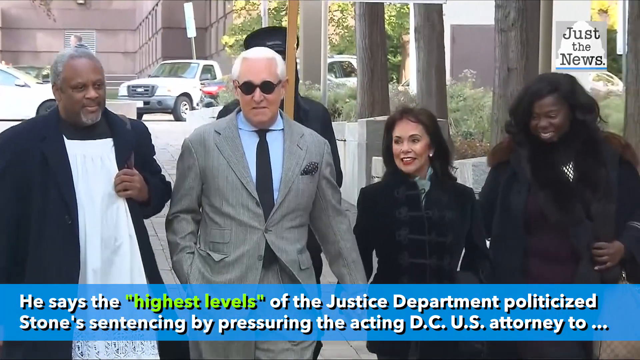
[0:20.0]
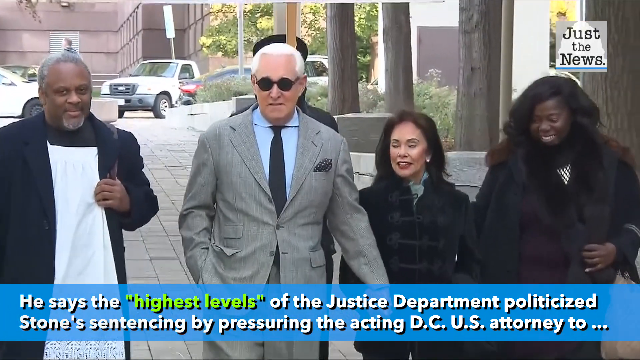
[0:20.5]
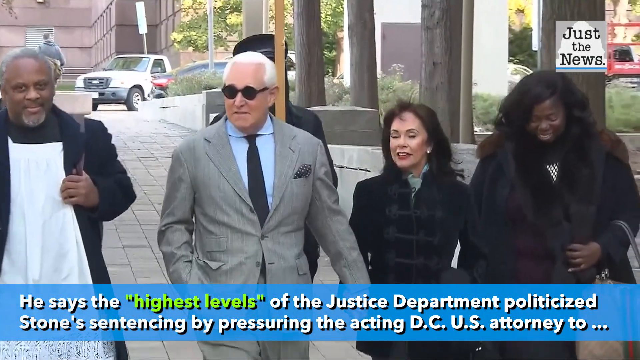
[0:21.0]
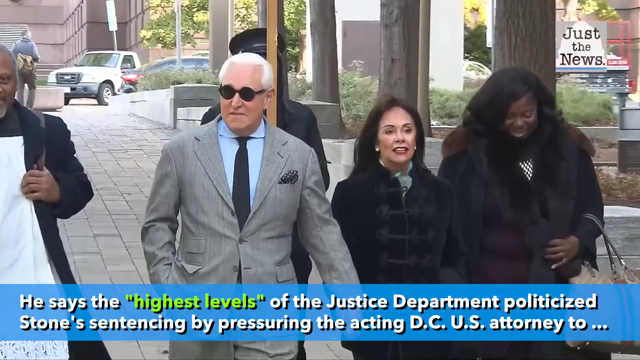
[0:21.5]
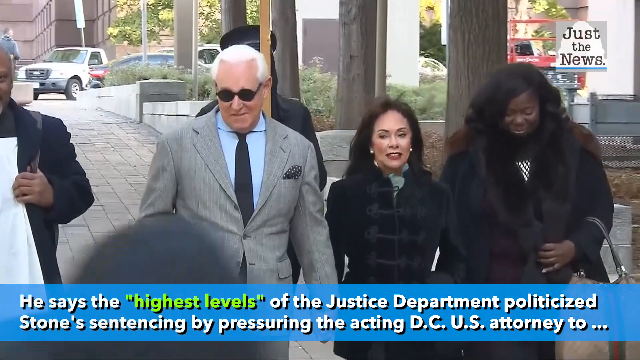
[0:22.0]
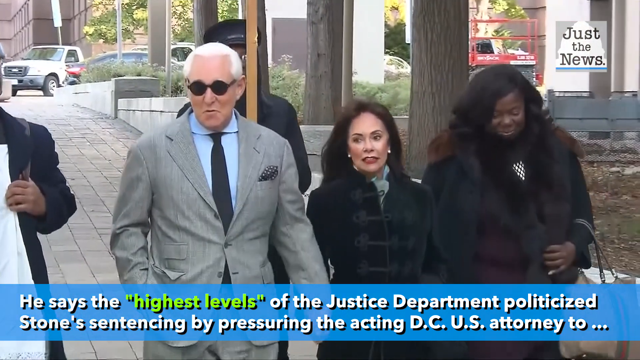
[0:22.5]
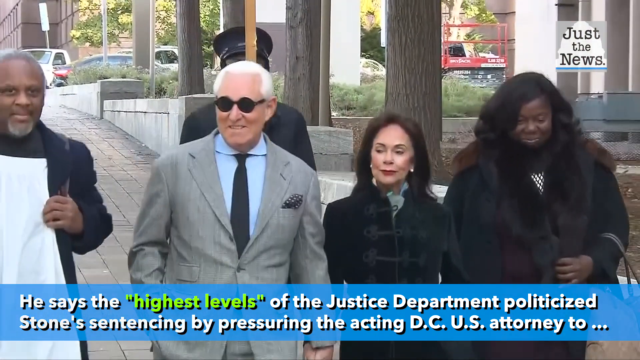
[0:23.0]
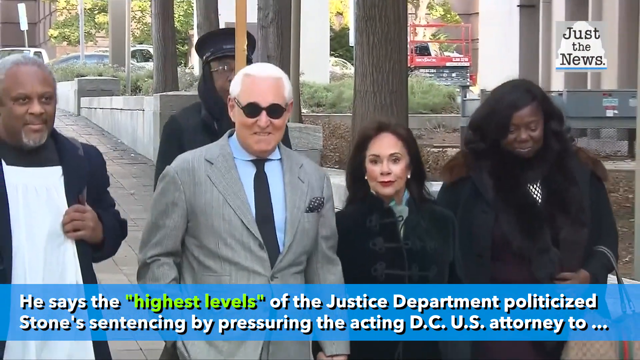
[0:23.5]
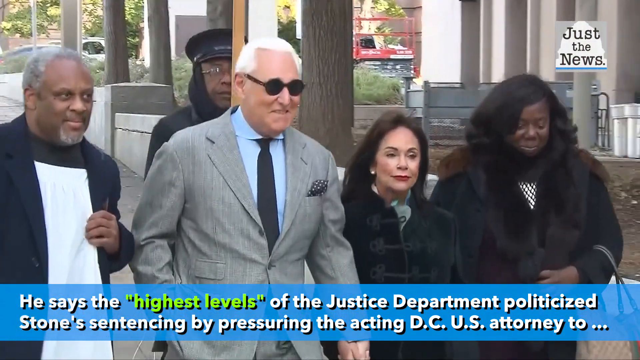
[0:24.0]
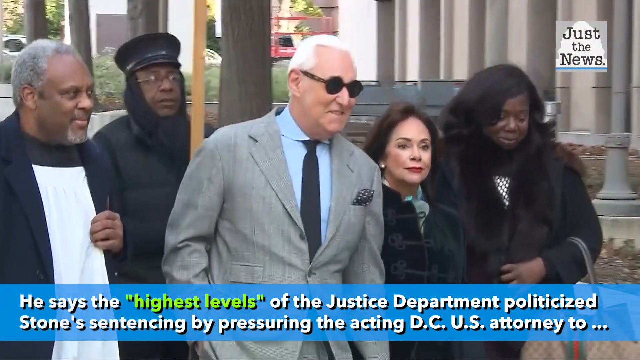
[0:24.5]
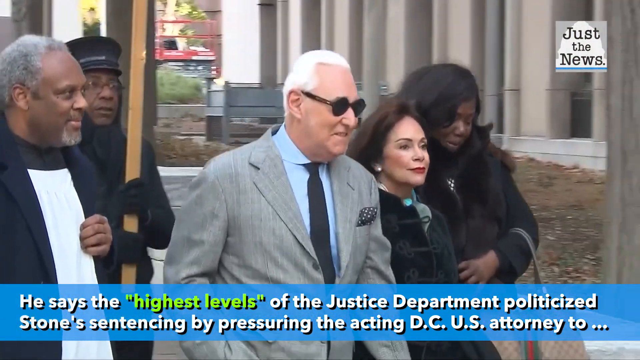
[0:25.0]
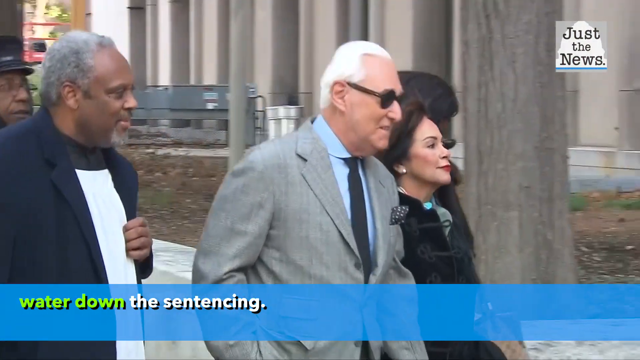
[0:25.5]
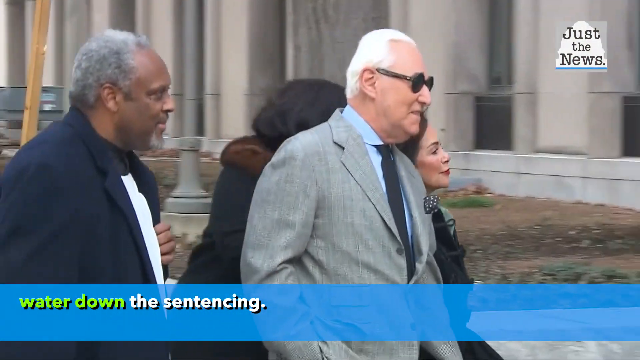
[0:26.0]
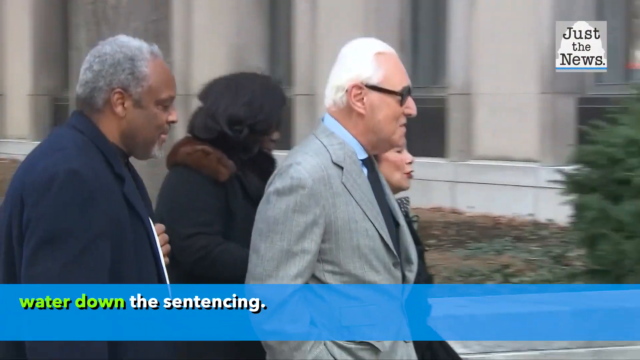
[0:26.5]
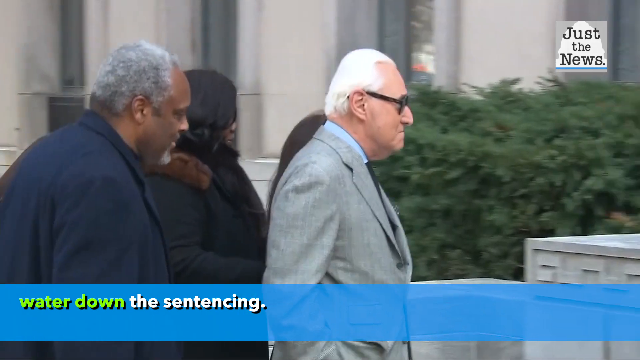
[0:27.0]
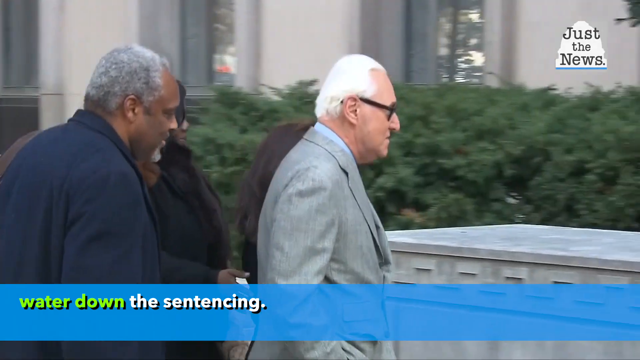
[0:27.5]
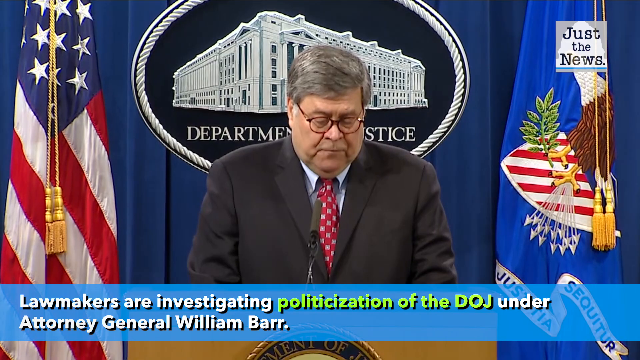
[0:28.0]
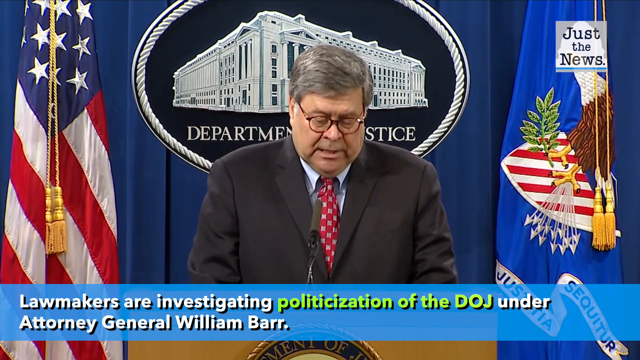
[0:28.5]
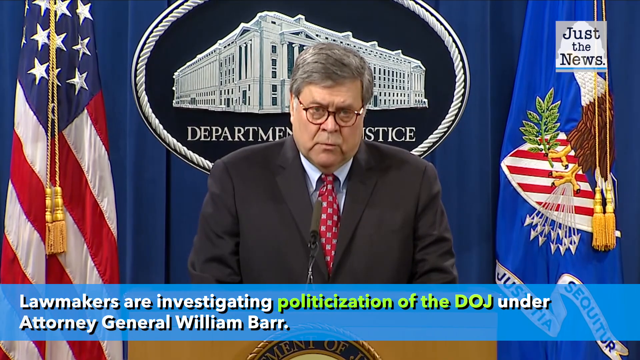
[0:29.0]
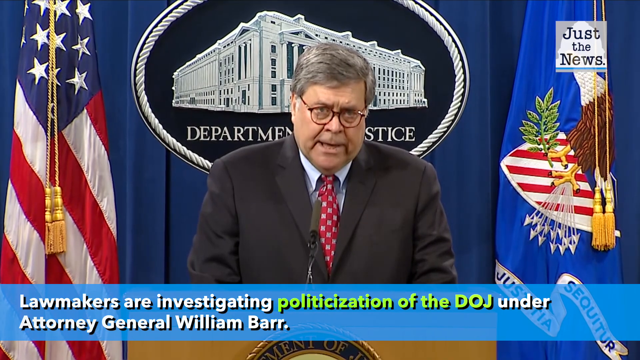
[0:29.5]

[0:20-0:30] Roger Stone walks outside again, apparently with his wife; they are holding hands, so she is likely his wife or possibly a partner. On-screen text refers to "the highest levels of the Justice Department" and something about pressuring another branch. One of the men walking next to him wears what looks like an apron with a jacket. Someone behind him carries a long wooden stick, possibly with a sign attached. The video then cuts to another man, a Caucasian man who looks to be in his late 50s or early 60s, speaking at a podium at the Department of Justice with two flags surrounding him.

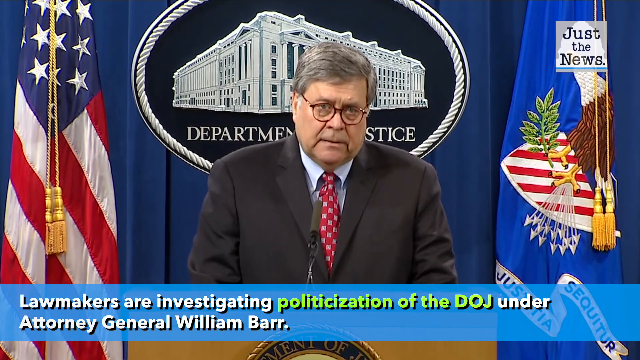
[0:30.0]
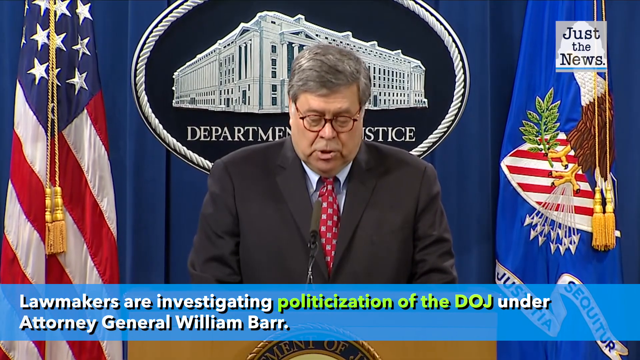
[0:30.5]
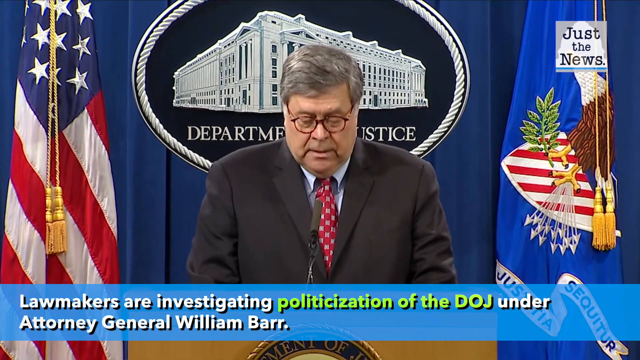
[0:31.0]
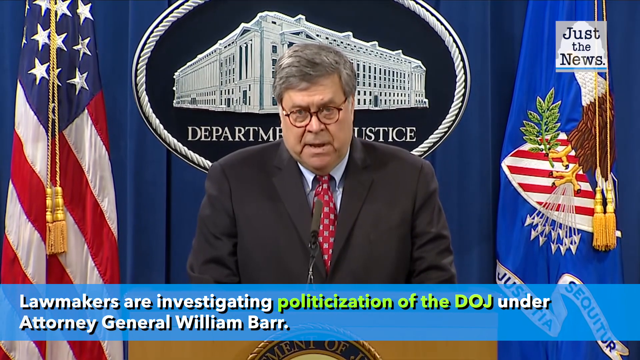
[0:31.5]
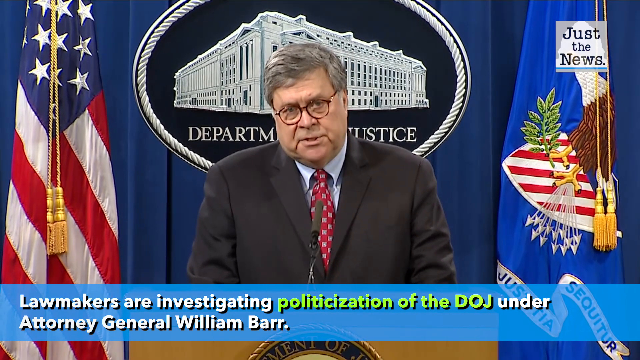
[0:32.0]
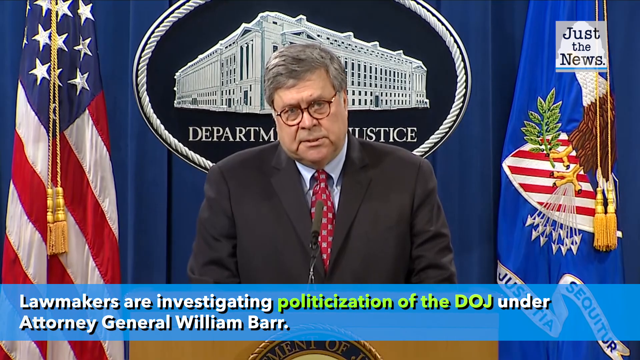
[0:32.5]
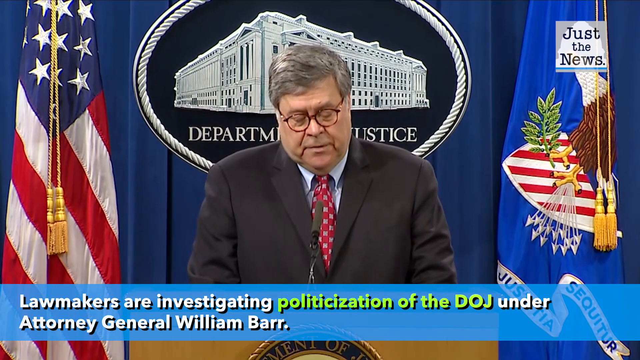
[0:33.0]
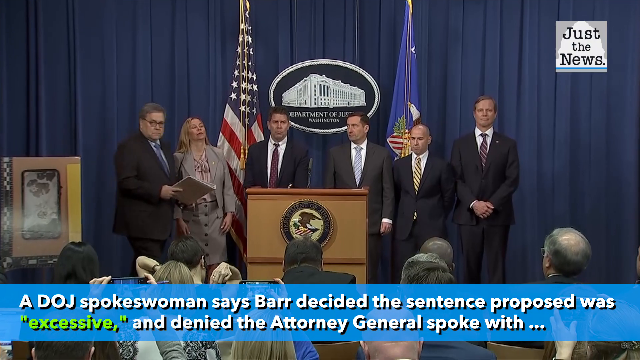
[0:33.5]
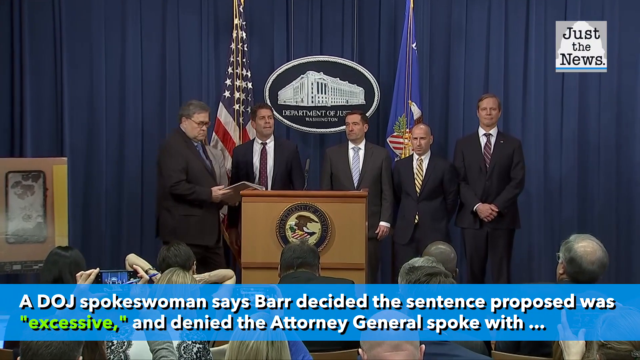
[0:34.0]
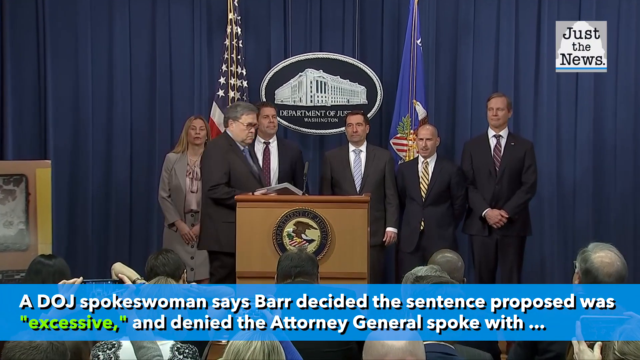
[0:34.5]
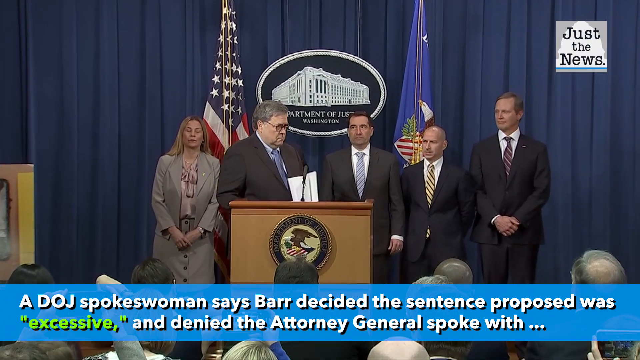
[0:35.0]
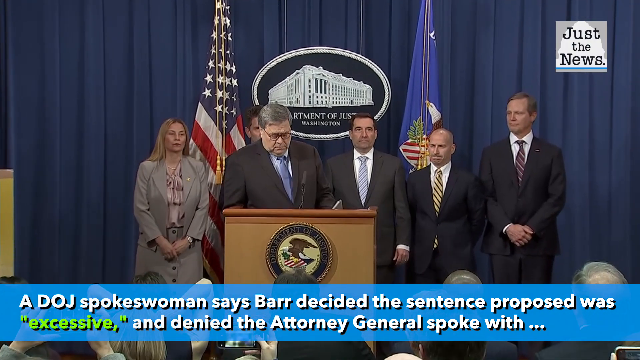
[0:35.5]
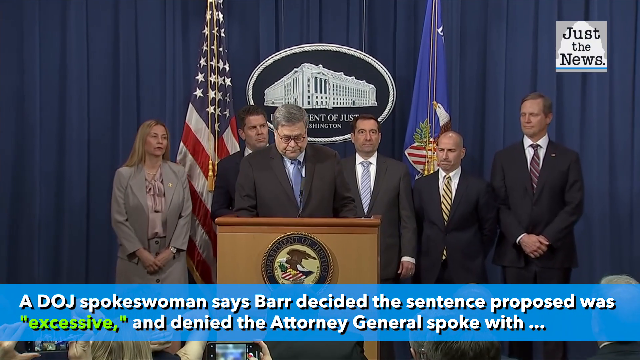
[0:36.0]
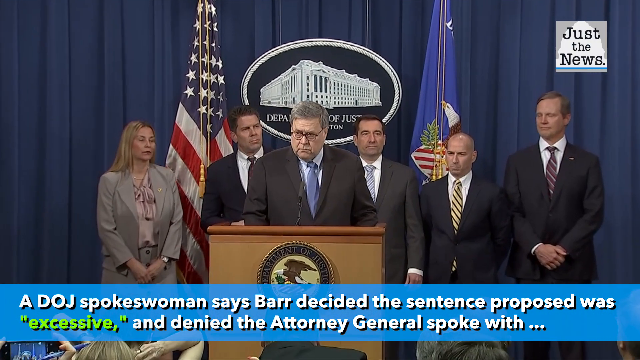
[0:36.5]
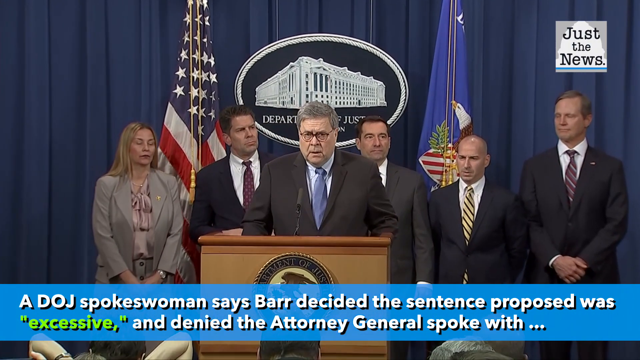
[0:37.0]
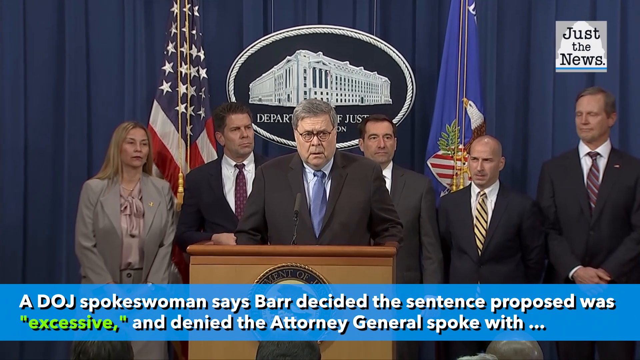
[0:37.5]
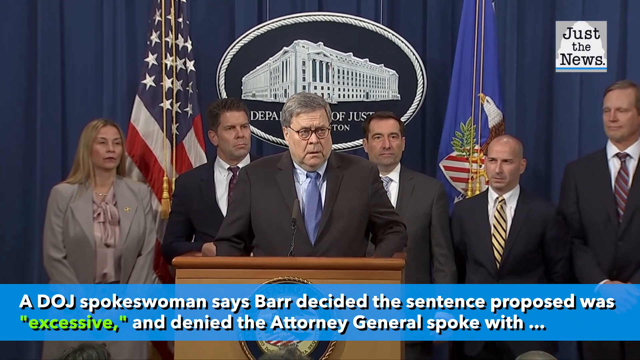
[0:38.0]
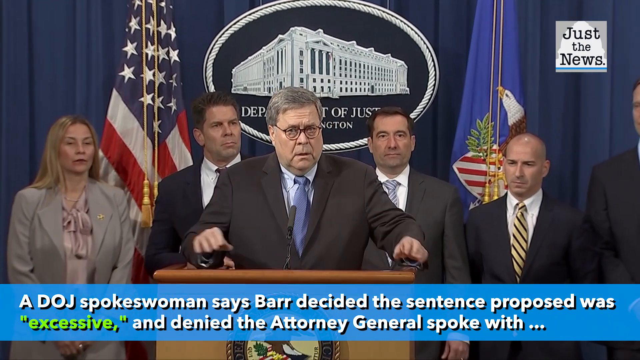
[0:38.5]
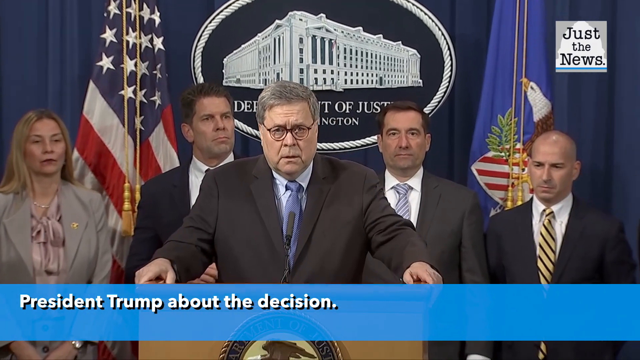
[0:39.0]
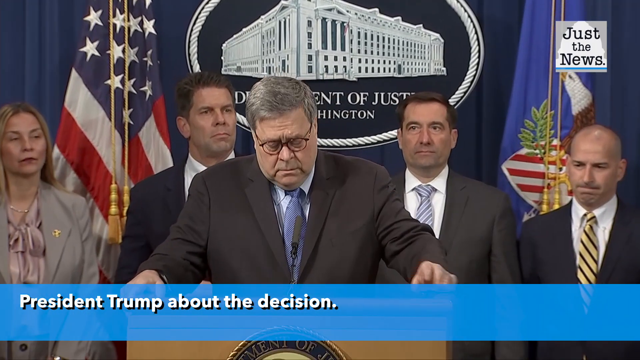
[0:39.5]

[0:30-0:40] An attorney, apparently named Barr, speaks at the Department of Justice and is seen briefly. In the next shot he appears to have a few people behind him as he speaks. The caption at the bottom mentions lawmakers, an investigation, the DOJ, a spokeswoman, and something about President Trump's decision. Flags are next to him: an American flag and what looks like a state or capitol flag. For the second part of the speech he has notes with him, and five people stand behind him, four men and one woman. Very briefly, some people are seen watching the speech.